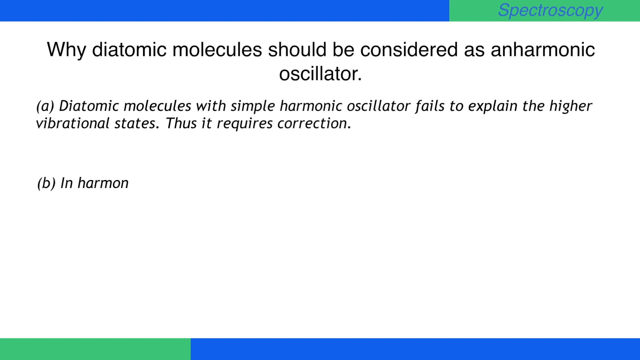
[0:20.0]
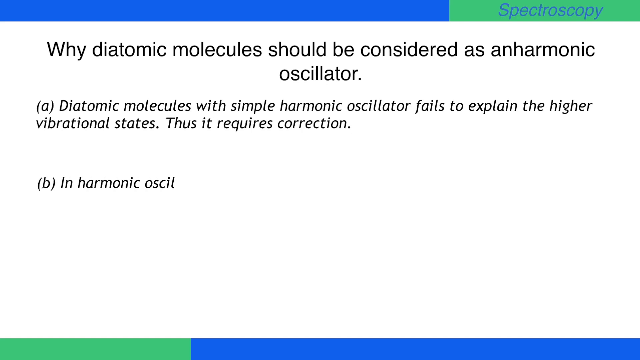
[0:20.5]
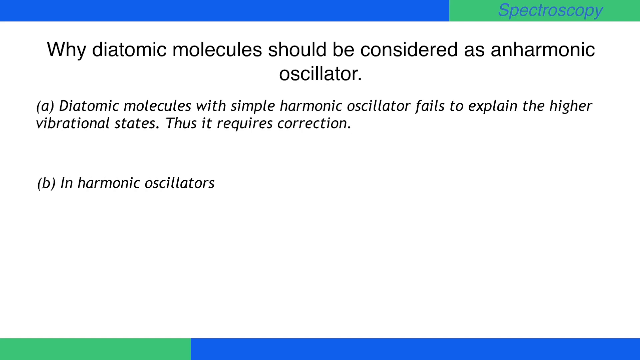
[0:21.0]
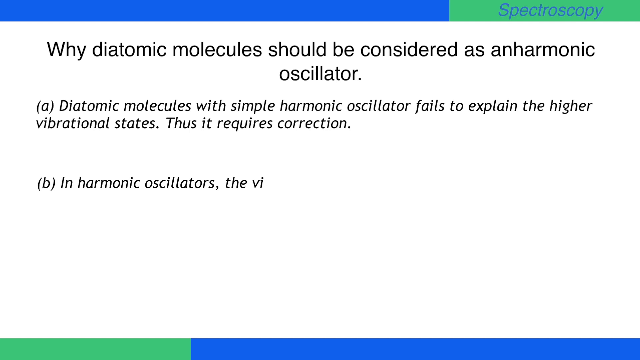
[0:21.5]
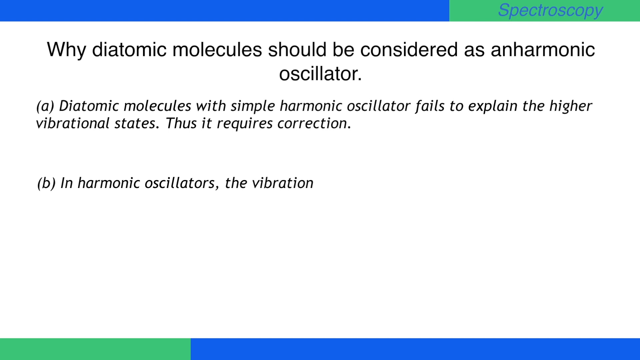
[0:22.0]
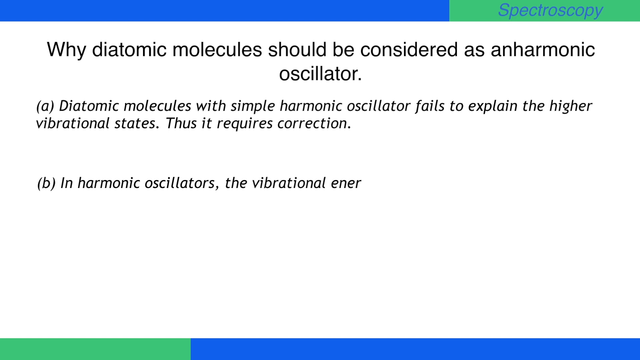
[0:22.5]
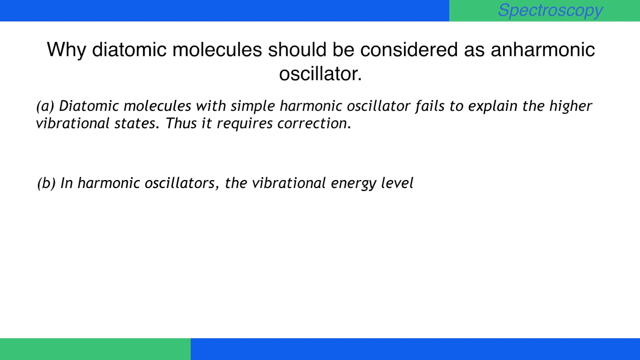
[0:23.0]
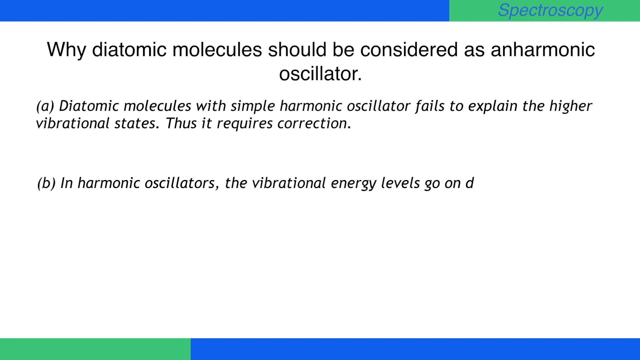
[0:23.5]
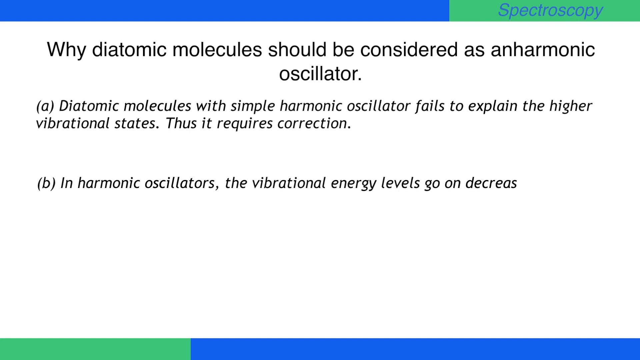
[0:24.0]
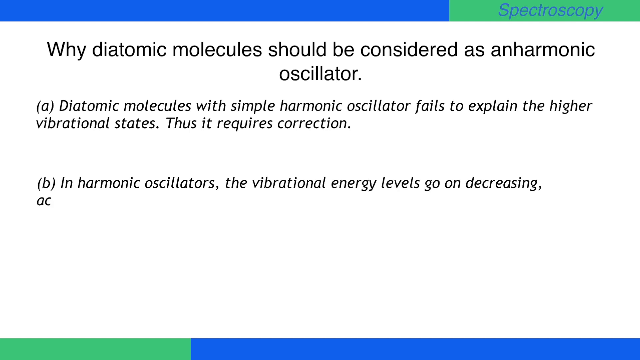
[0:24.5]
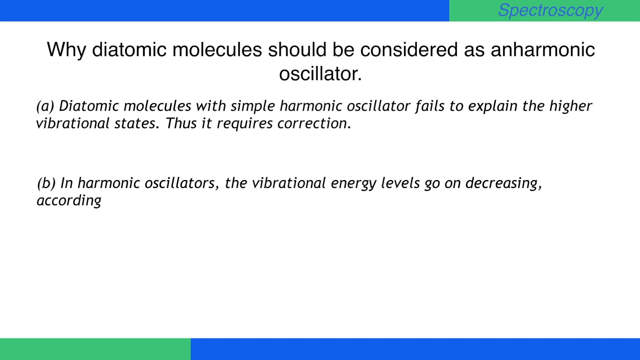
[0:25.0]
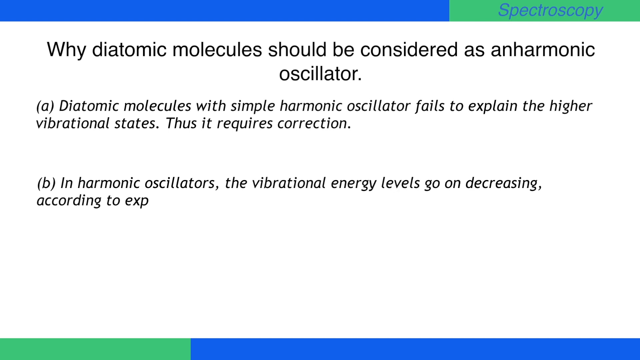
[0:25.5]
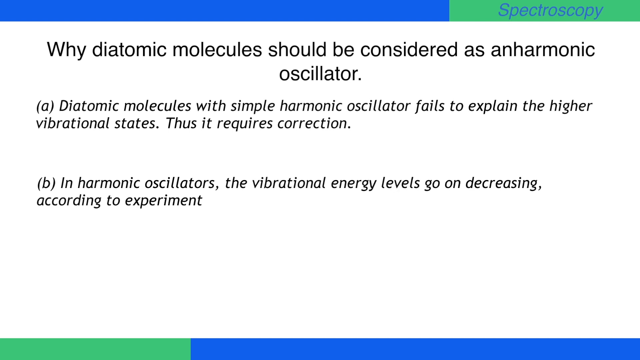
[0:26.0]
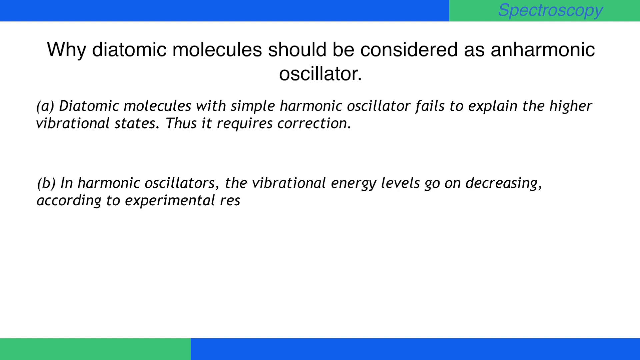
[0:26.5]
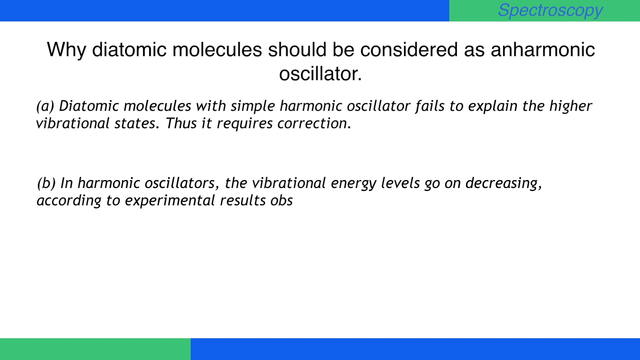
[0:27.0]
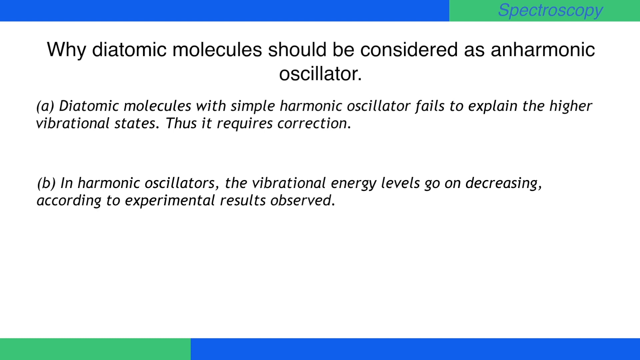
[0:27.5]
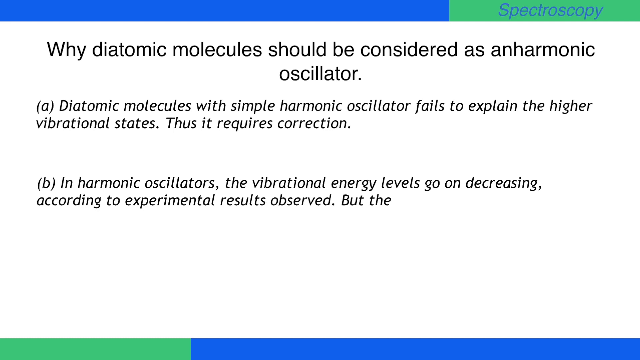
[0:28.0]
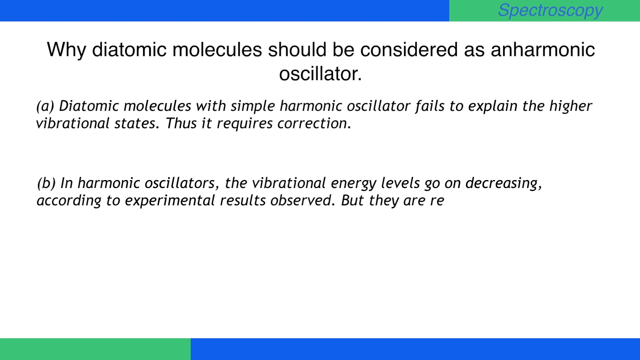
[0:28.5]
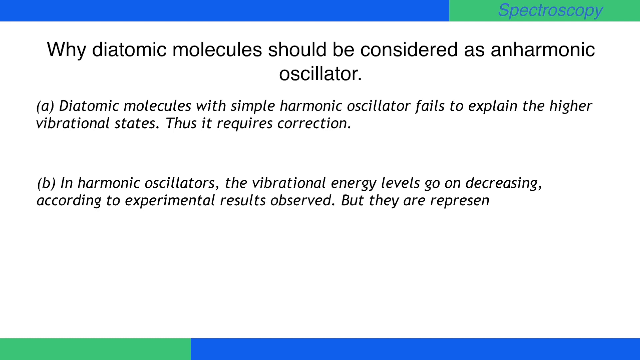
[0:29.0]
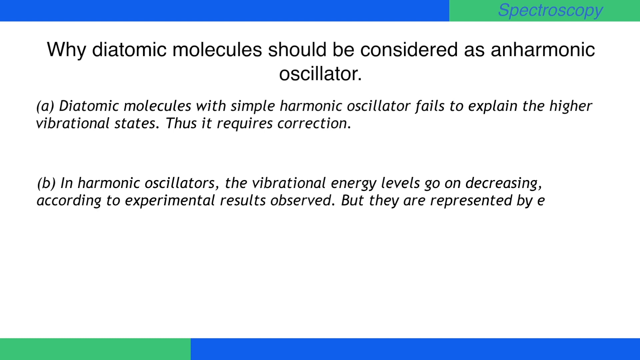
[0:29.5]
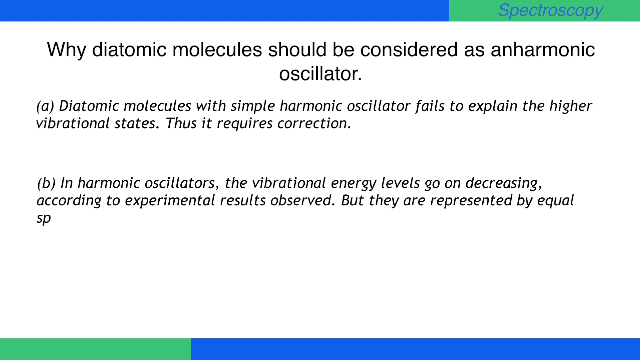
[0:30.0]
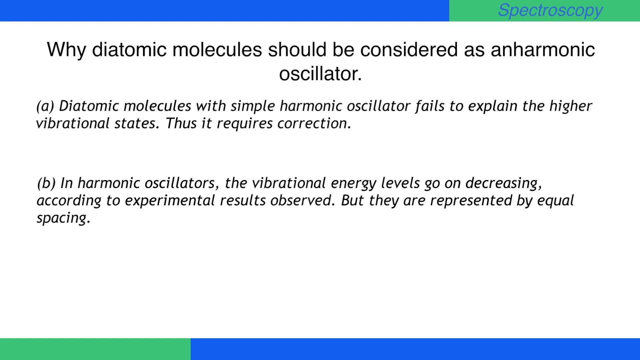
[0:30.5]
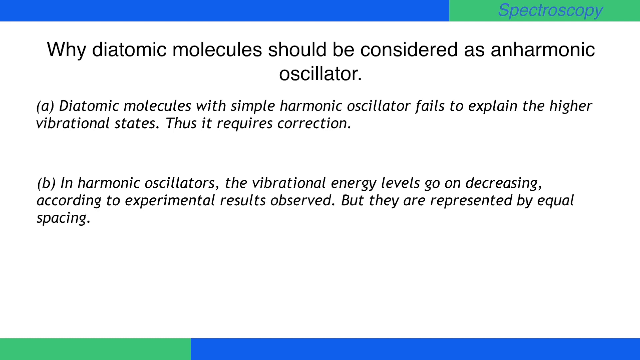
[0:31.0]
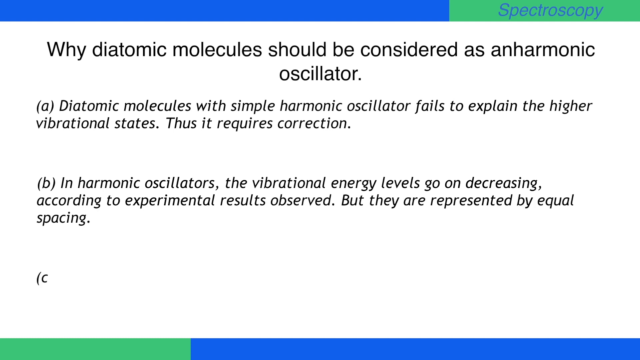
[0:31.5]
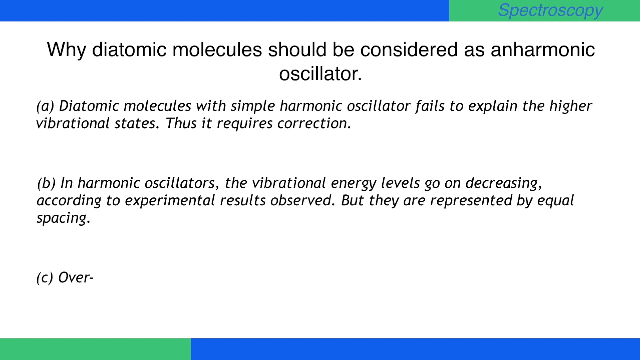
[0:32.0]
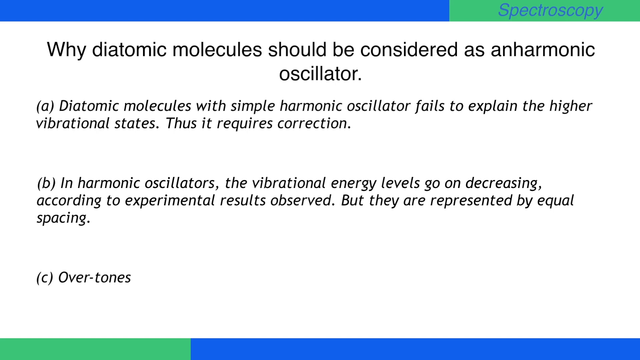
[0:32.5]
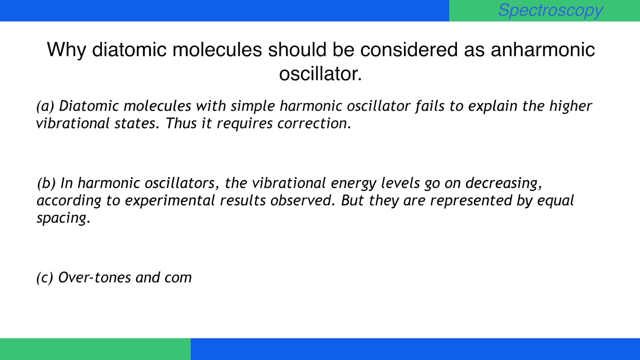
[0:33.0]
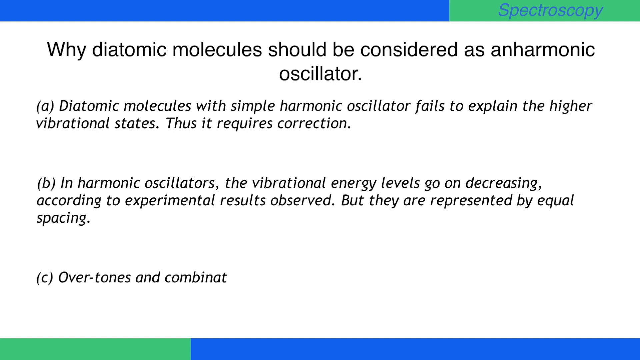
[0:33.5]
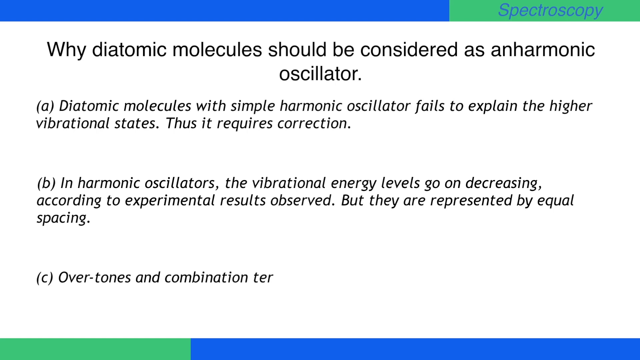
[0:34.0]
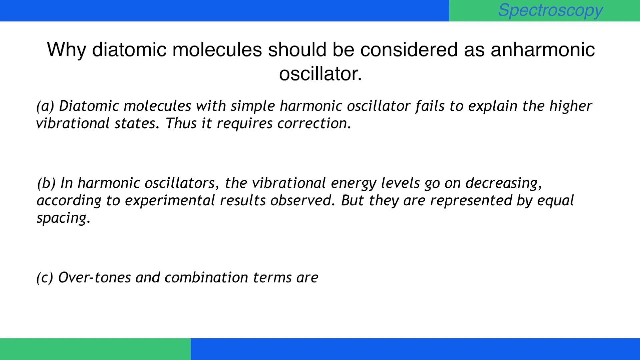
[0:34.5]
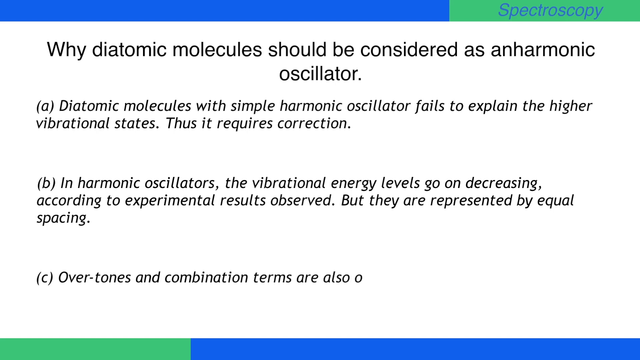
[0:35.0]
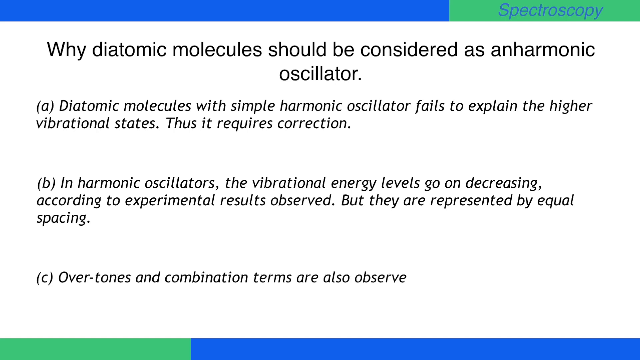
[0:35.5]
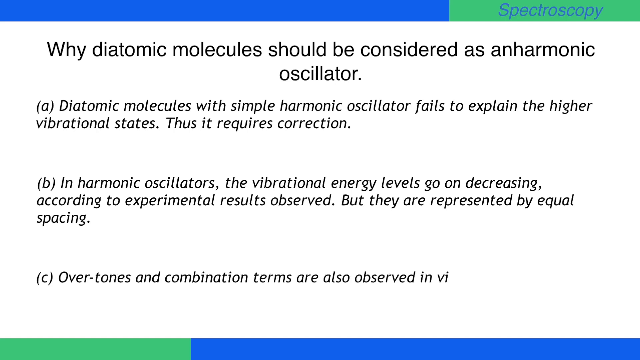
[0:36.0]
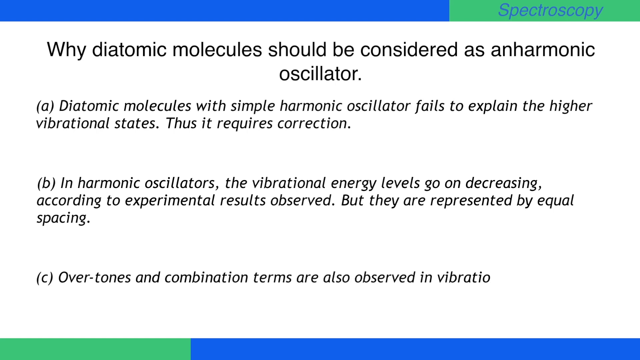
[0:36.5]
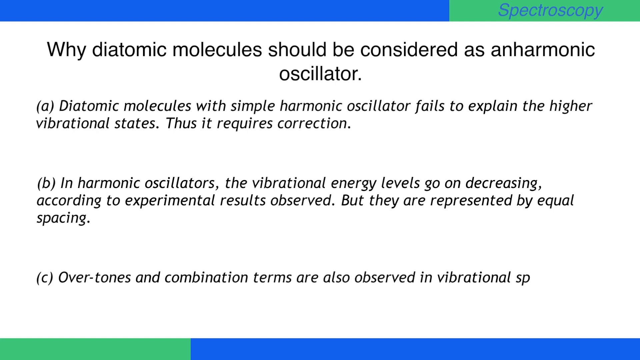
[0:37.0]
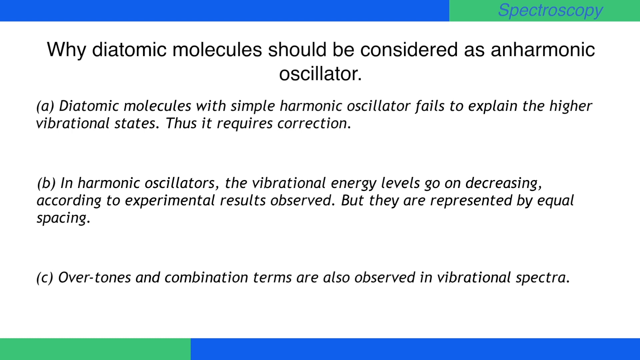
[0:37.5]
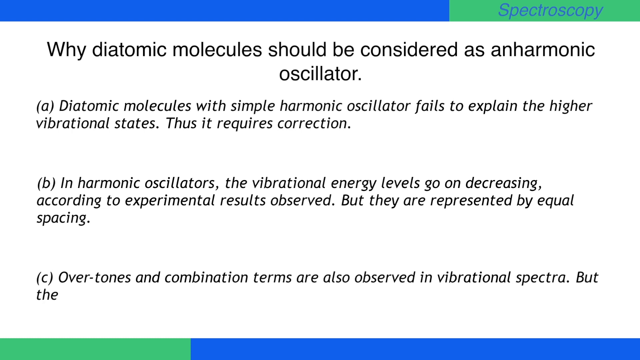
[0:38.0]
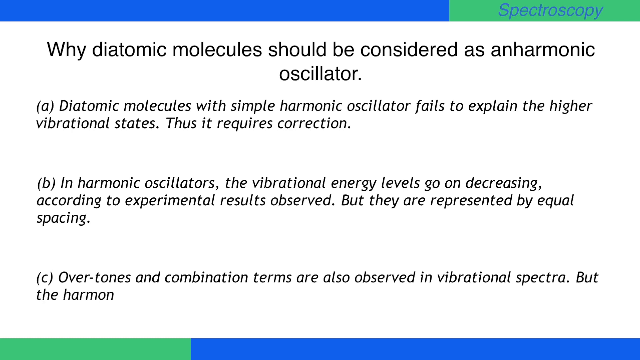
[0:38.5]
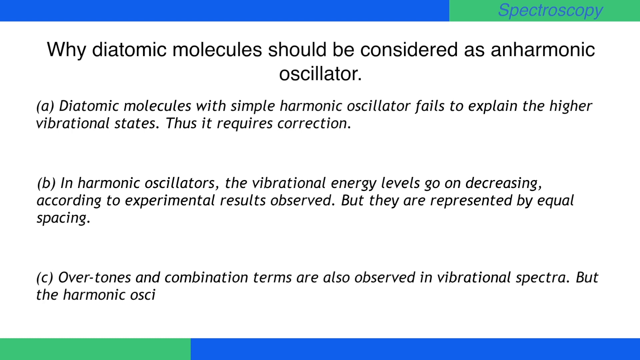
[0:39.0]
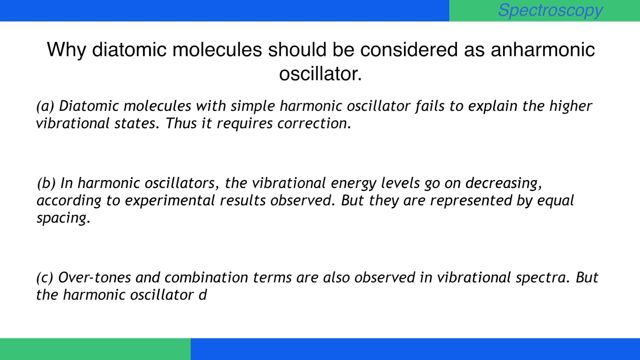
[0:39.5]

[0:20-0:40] A second line of text, labeled with the letter B, types out slowly and reads "in harmonic oscillators the vibrational energy levels go on decreasing according to experimental results observed that they are represented by equal spacing." All of the text is on a white background, and the video appears to be outlining the reasons why diatomic molecules should be considered as anharmonic oscillator. The letter C then begins typing out, reading "overtones and combination terms are also observed in vibrational spectra, but the harmonic oscillator does" before the sentence is cut off. The text is black and in a sans serif font.